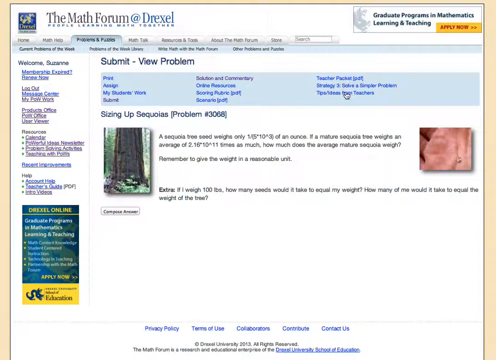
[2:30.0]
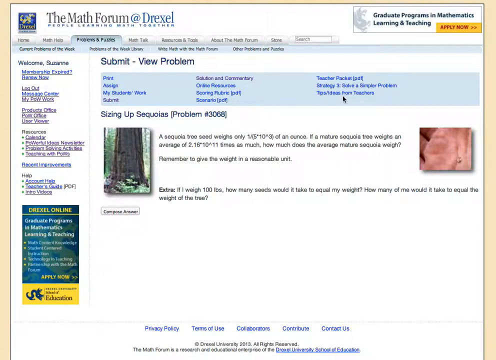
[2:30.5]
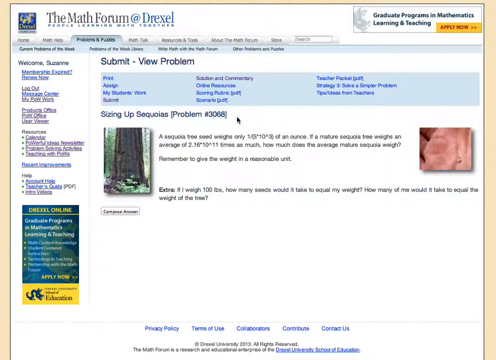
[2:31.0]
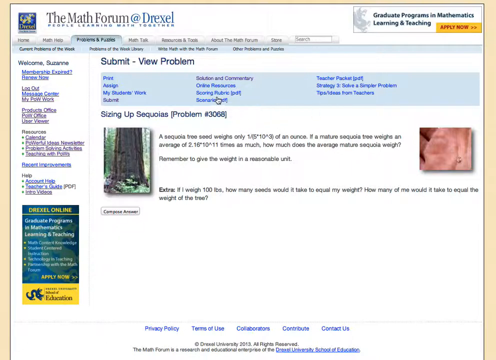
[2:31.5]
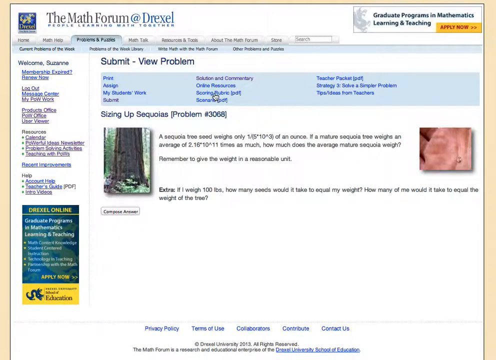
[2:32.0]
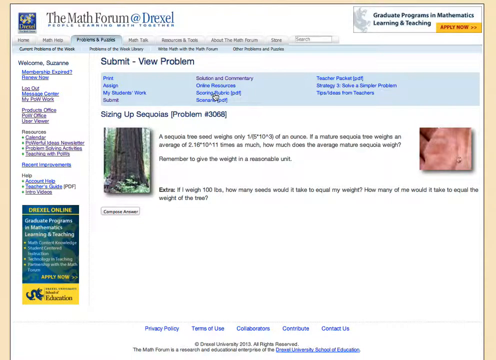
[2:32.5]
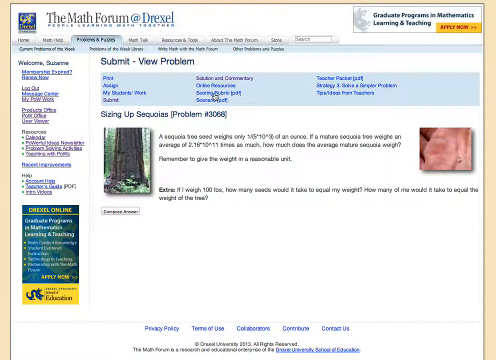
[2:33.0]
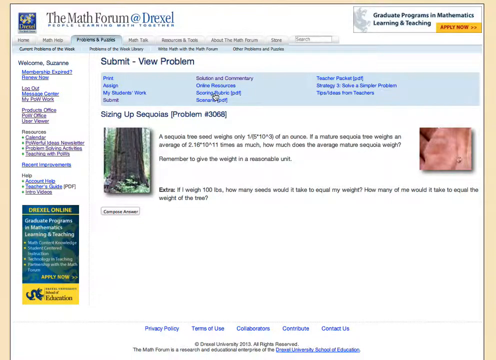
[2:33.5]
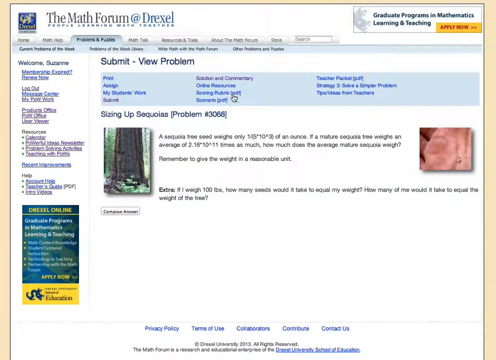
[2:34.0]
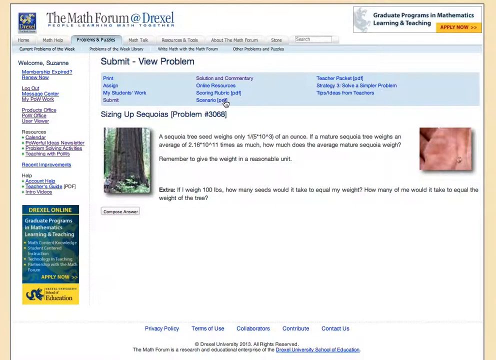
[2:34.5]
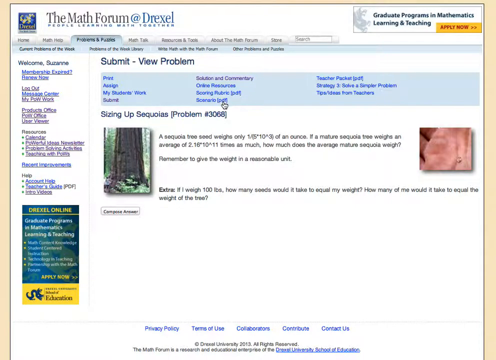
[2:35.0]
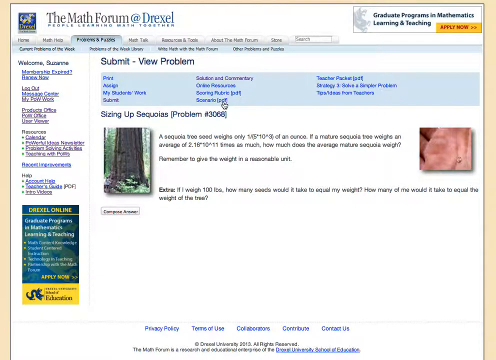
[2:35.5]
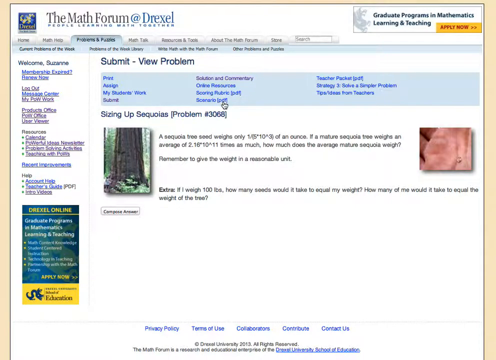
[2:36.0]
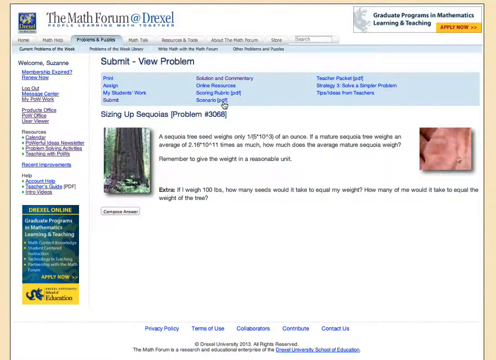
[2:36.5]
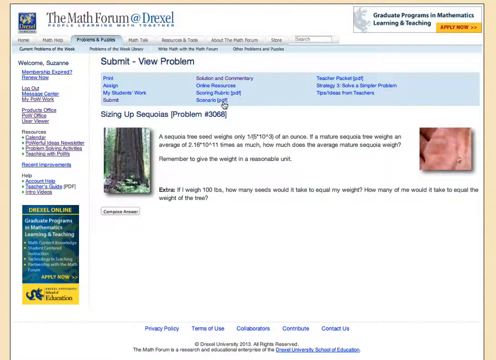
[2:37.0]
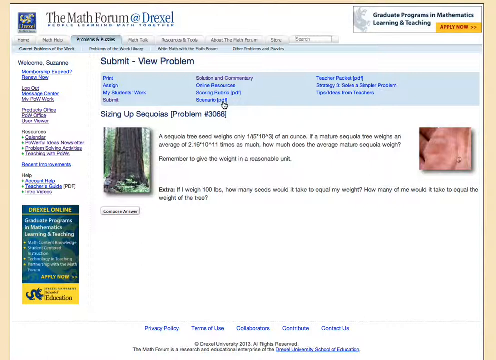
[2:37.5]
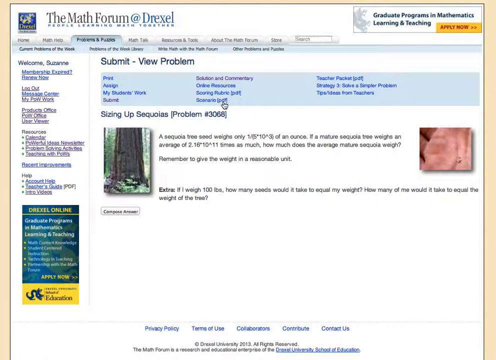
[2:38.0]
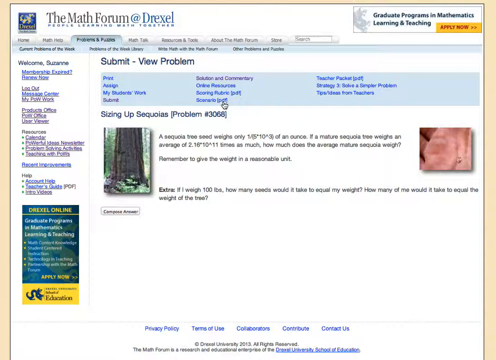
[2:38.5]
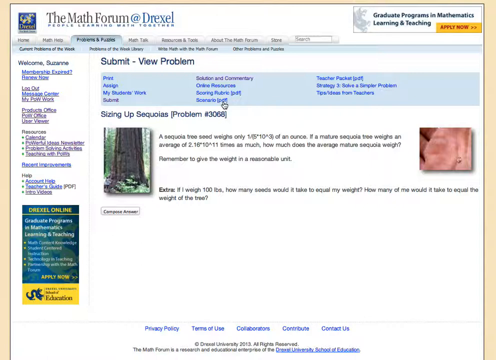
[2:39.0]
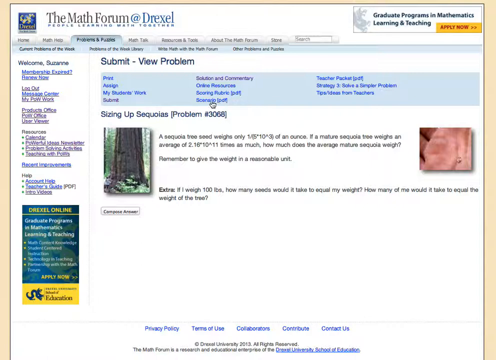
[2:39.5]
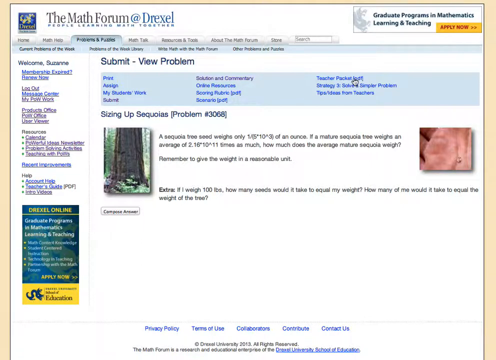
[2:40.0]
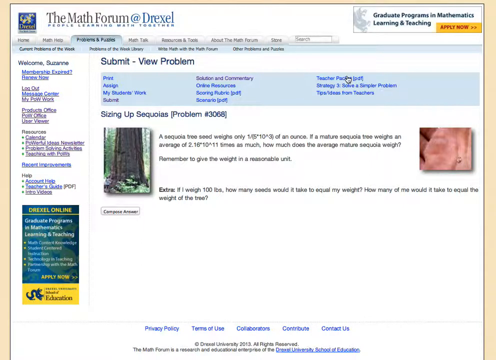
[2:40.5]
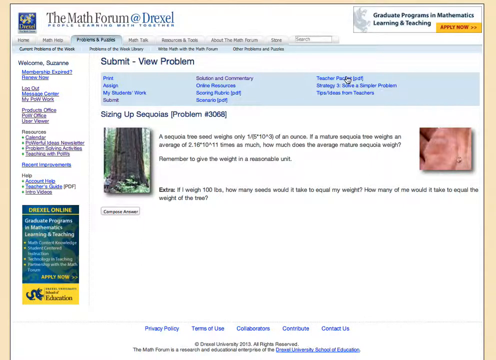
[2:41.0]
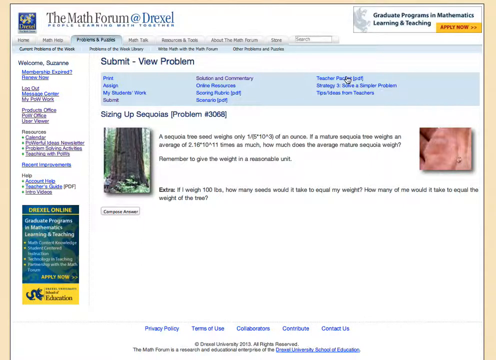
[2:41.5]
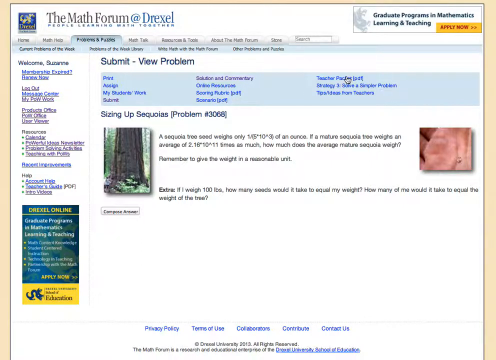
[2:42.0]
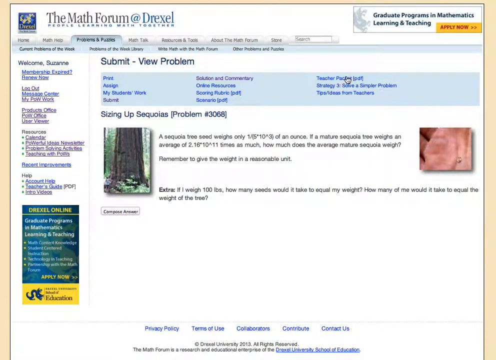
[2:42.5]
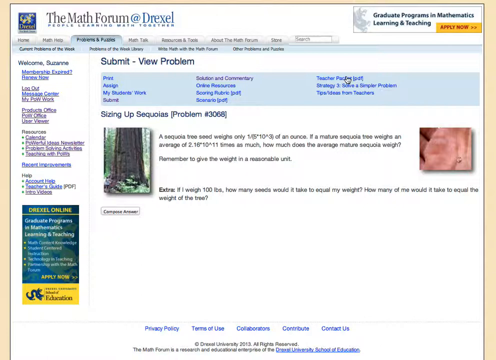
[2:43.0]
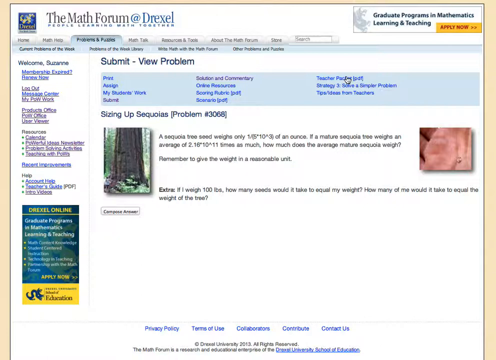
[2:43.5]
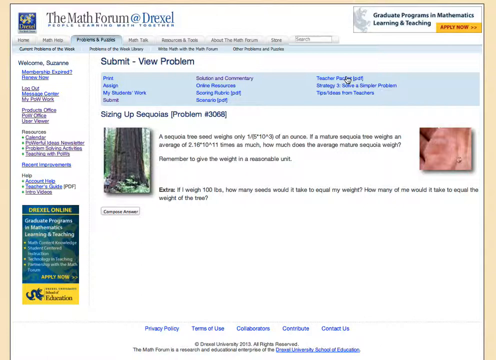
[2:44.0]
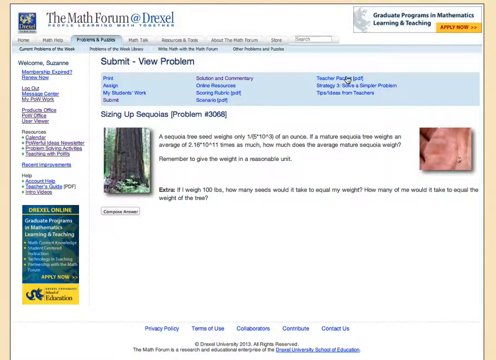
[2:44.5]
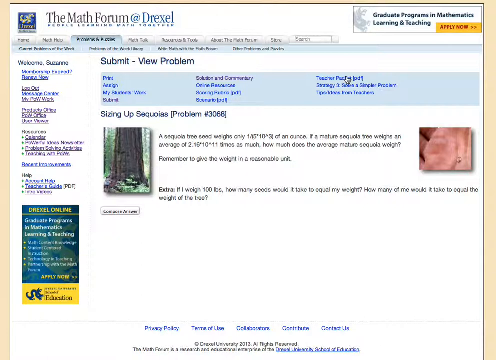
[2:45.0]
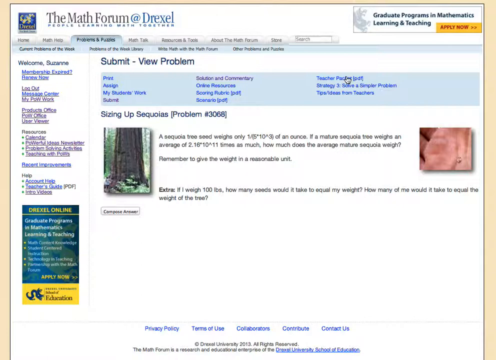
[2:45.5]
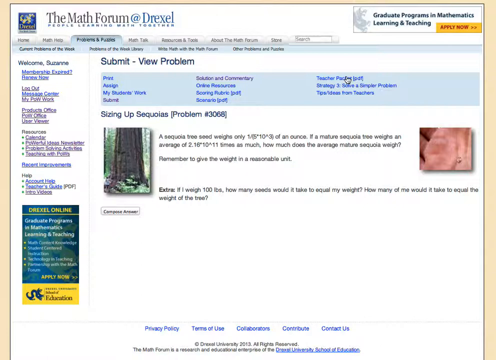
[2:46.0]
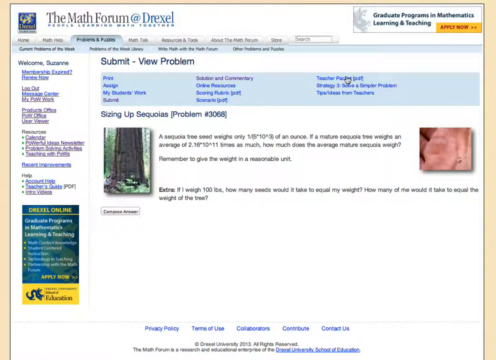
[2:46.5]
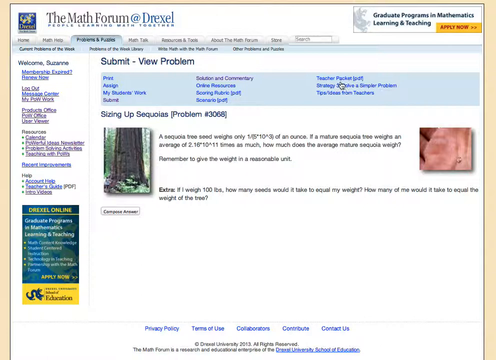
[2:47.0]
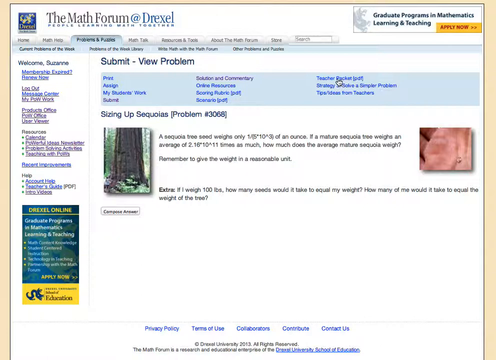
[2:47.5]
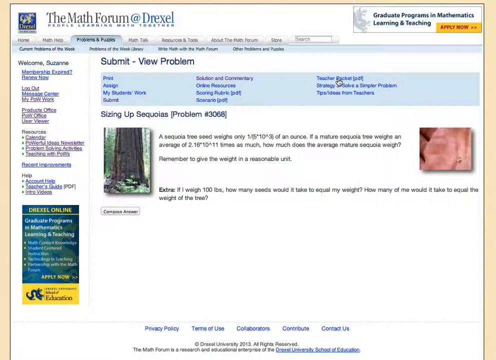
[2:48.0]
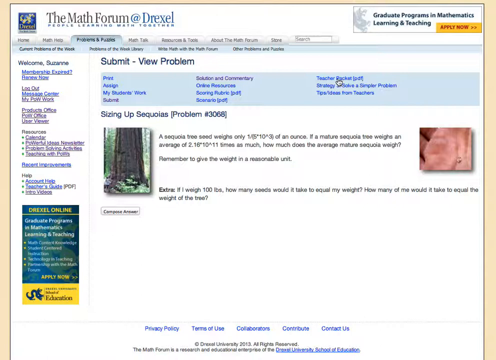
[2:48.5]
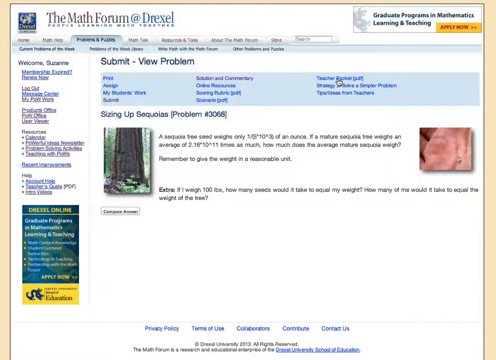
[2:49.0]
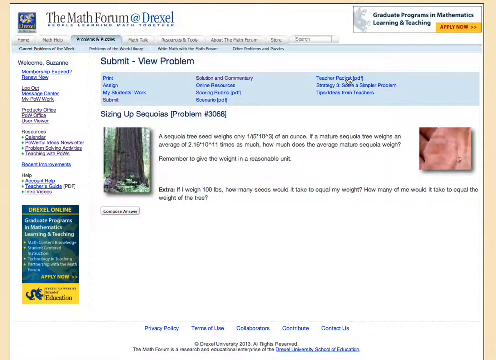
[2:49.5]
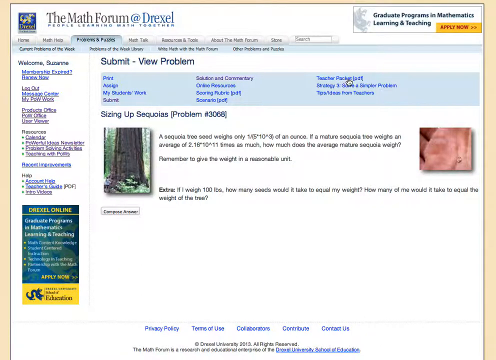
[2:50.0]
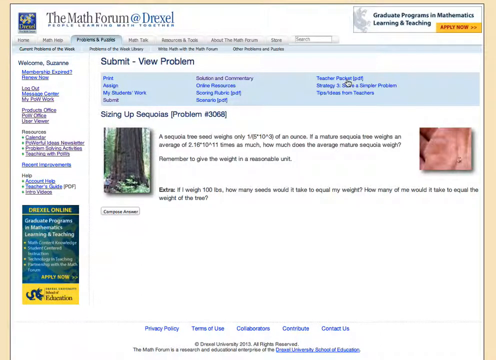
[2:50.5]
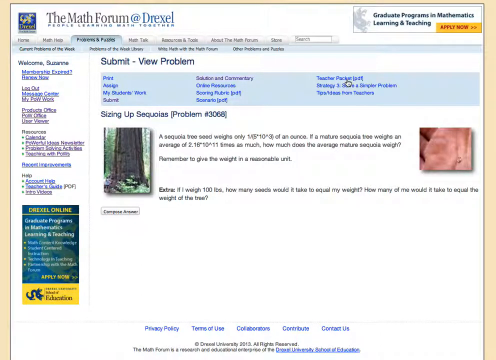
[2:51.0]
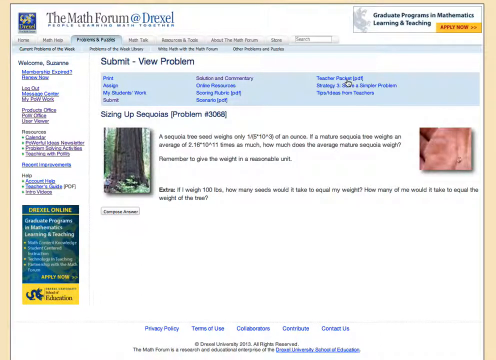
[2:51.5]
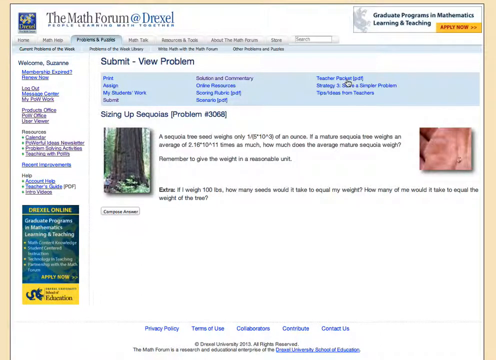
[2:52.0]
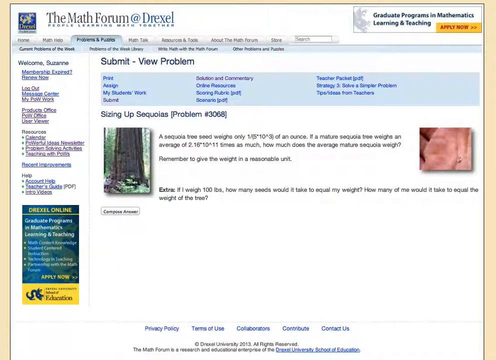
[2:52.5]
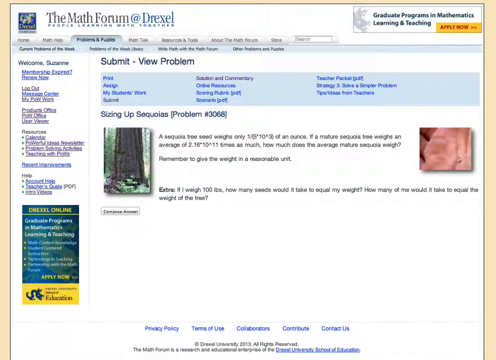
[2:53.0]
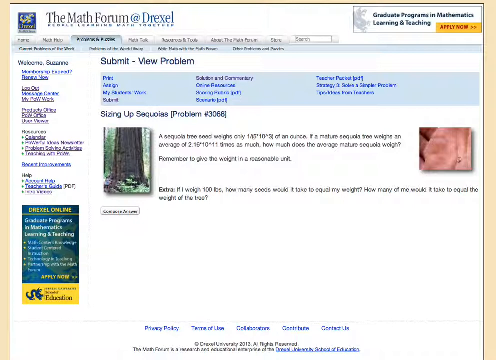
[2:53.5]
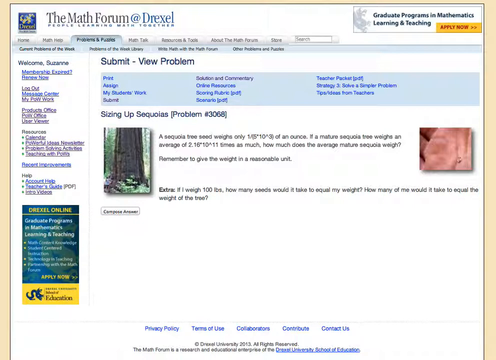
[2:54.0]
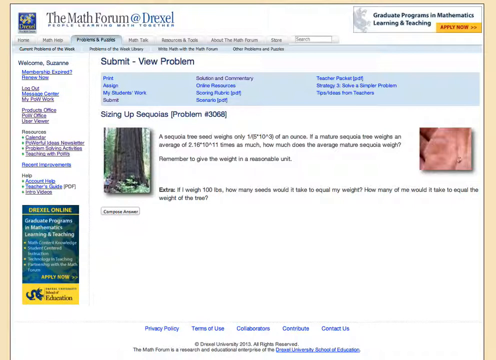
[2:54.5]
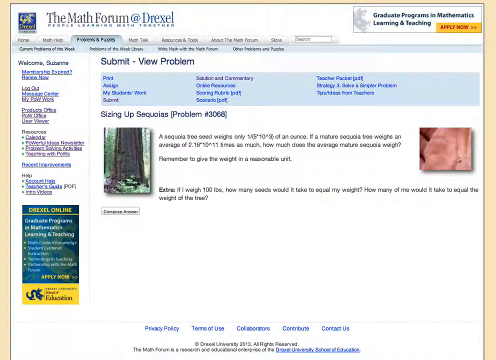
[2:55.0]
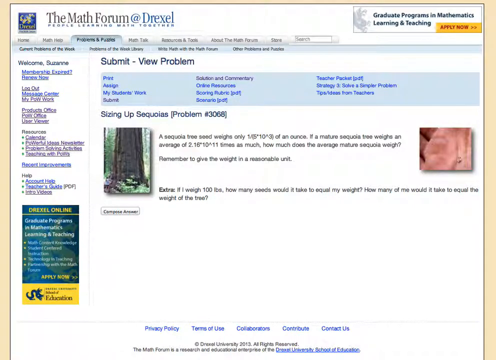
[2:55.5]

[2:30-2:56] A webpage shows "the Math Forum at Drexel, people learning math together" at the top left corner. In the top right corner of the screen is a rectangle with blue text inside that says "graduate programs in mathematics, learning and teaching, apply now." Below that text area is a tab menu whose tabs read, from left to right, "Home," "Math Help," "Problems and Puzzles," "Math Talk," "Resources and Tools," "About the Math Forum," and "Store," with a search bar next to the final tab on the right. Below this it says "Submit," "View Problem," "Print," "Design," "My Students' Work," "Submit," "Solution and Commentary," "Online Resources," and "Teacher Packet," with other items too blurry to read. Below that area it says "Sizing Up Sequoias, Problem Number 3068," followed by text about a sequoia tree: "a sequoia tree seed weighs only," a math formula, "of an ounce. If a mature sequoia tree weighs an average of," another formula, "times as much. How much does the average mature sequoia weigh?" and "Remember to give the weight in a reasonable unit."